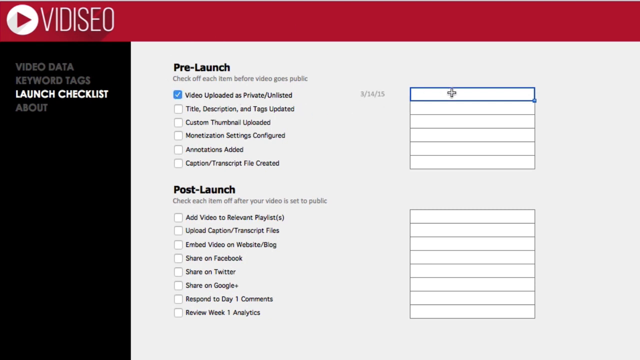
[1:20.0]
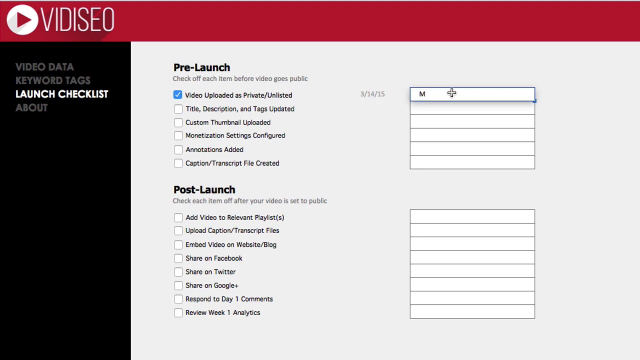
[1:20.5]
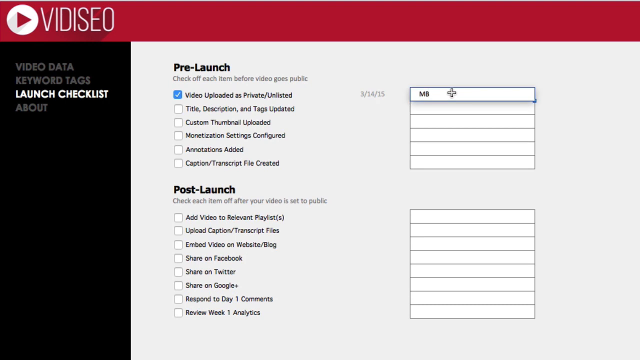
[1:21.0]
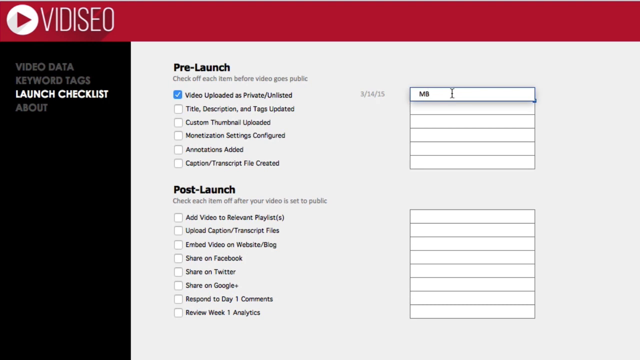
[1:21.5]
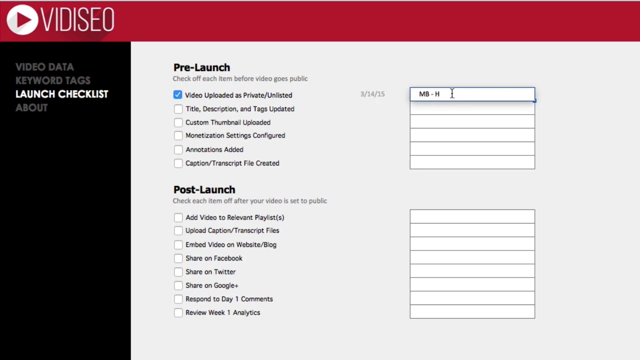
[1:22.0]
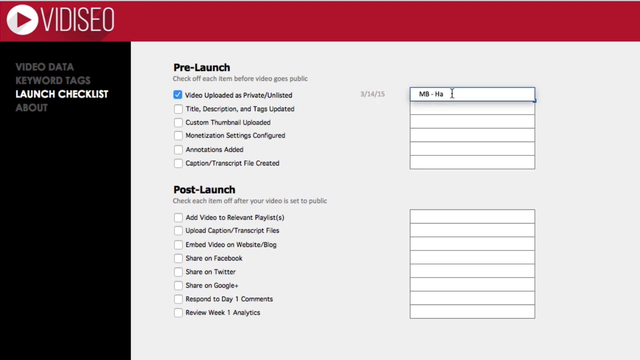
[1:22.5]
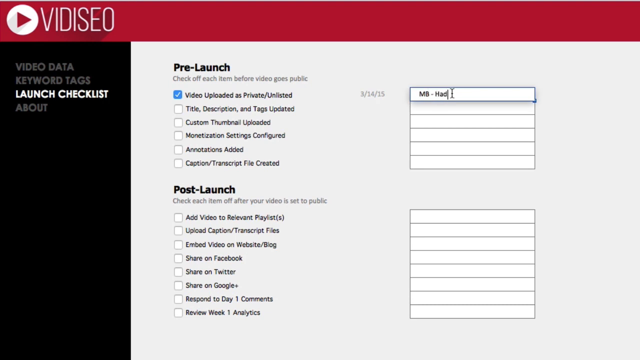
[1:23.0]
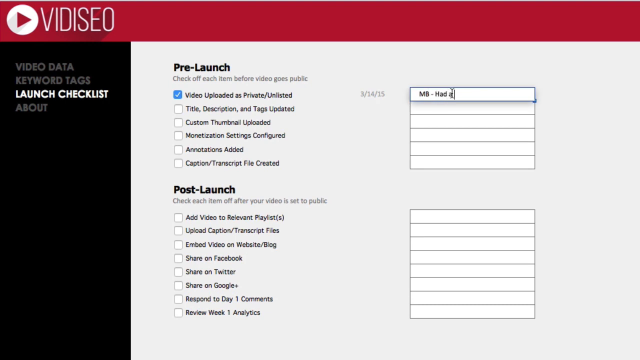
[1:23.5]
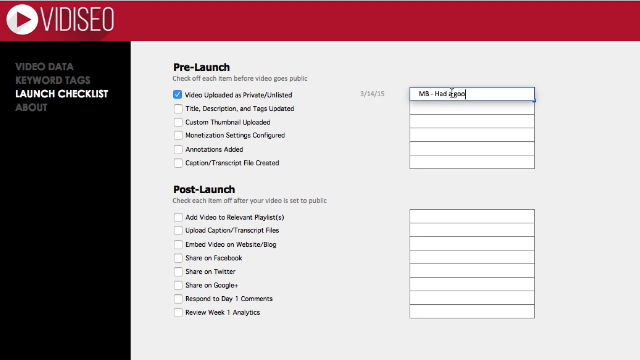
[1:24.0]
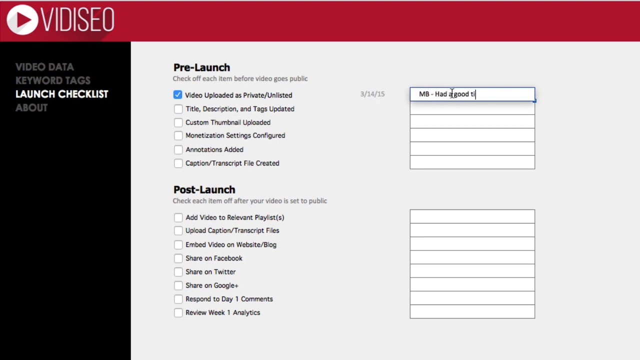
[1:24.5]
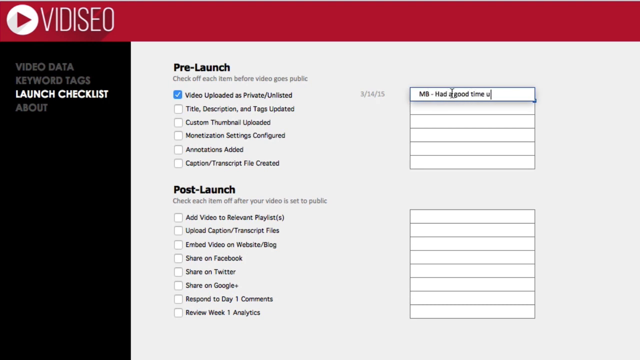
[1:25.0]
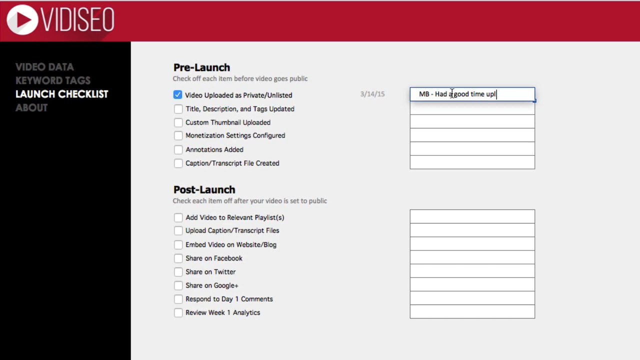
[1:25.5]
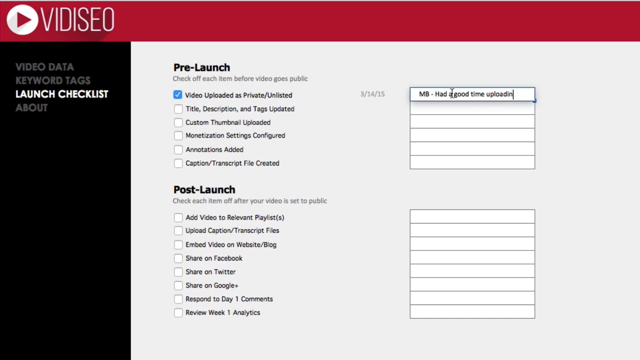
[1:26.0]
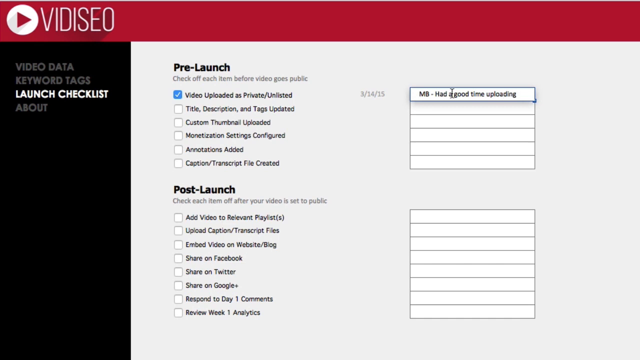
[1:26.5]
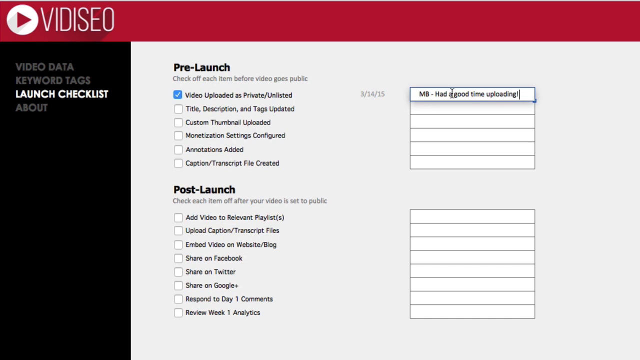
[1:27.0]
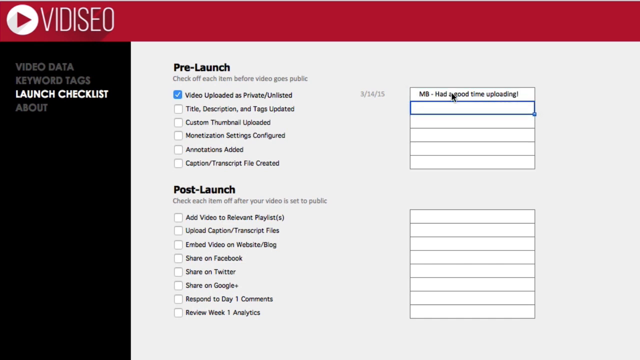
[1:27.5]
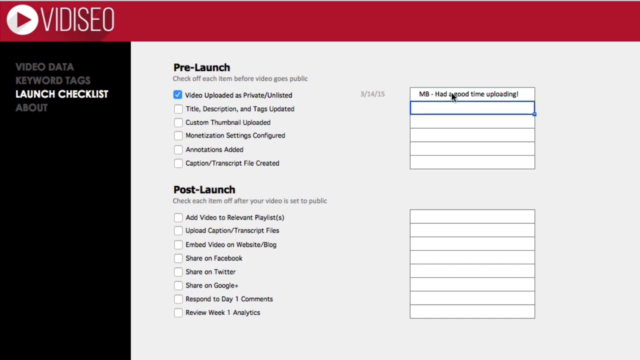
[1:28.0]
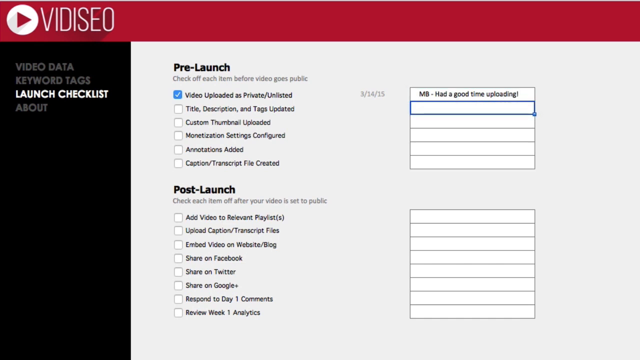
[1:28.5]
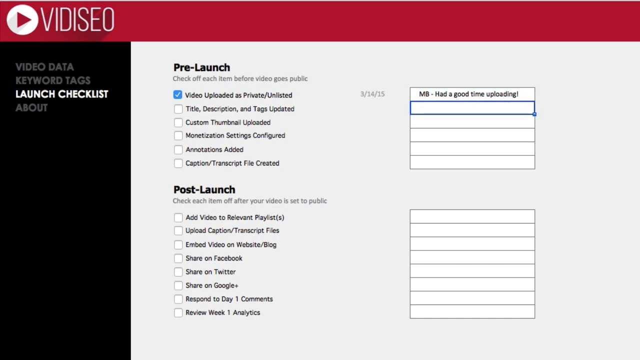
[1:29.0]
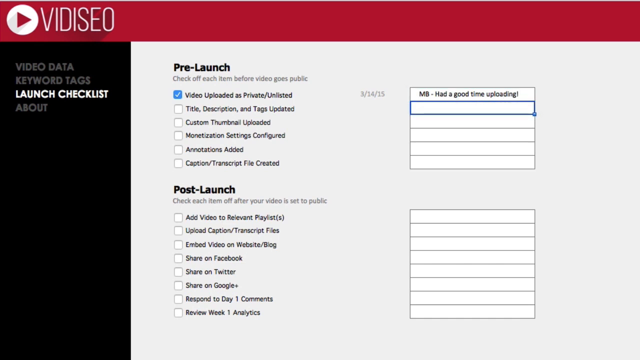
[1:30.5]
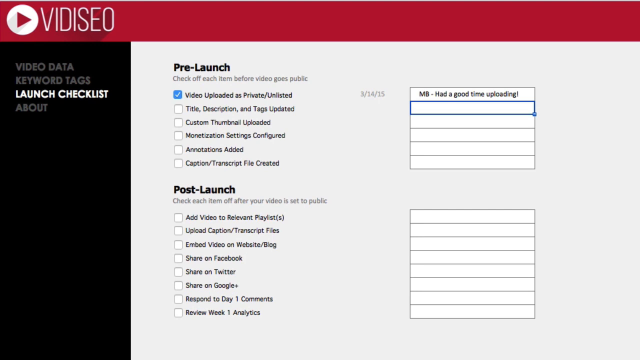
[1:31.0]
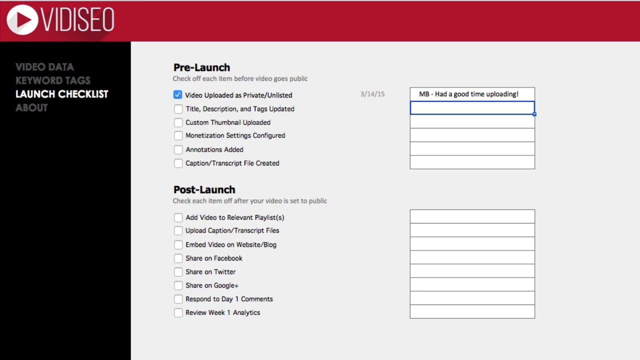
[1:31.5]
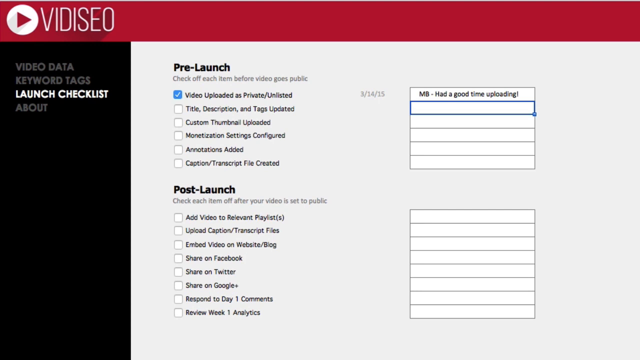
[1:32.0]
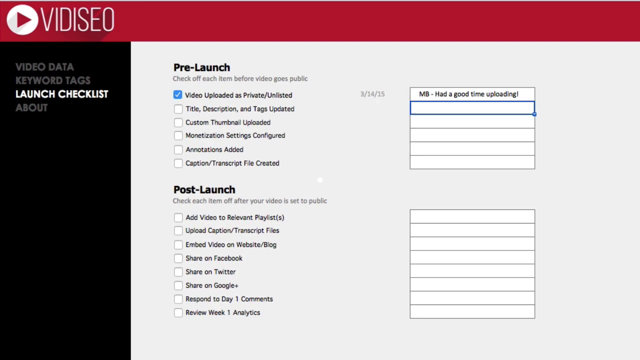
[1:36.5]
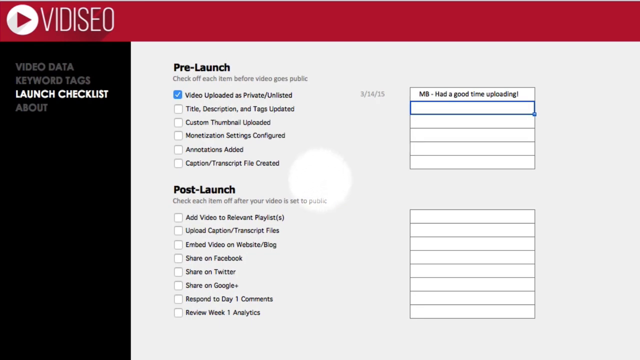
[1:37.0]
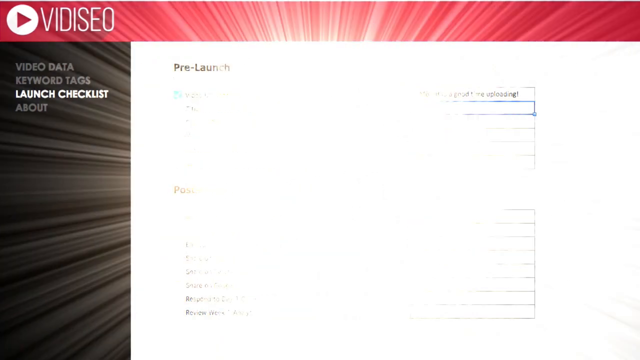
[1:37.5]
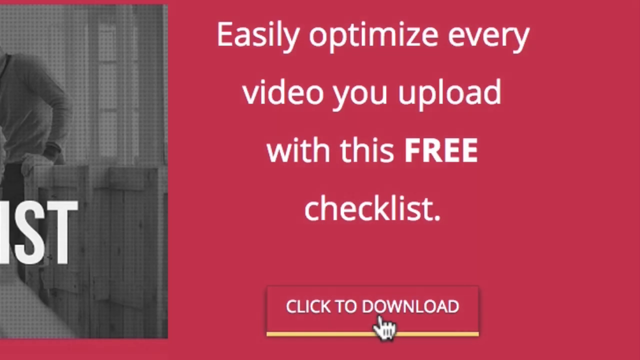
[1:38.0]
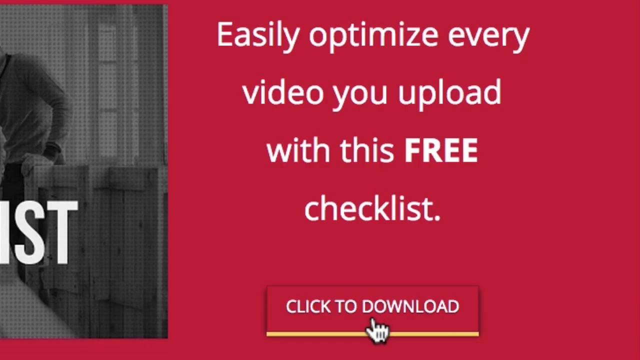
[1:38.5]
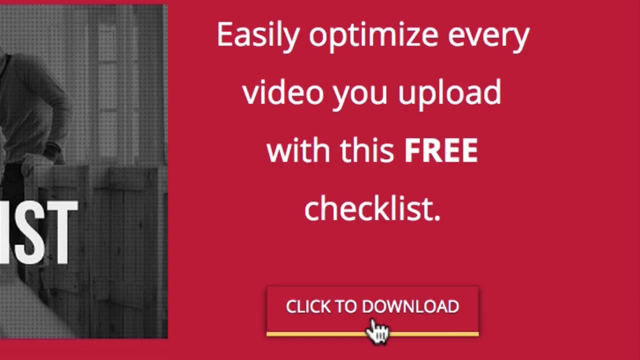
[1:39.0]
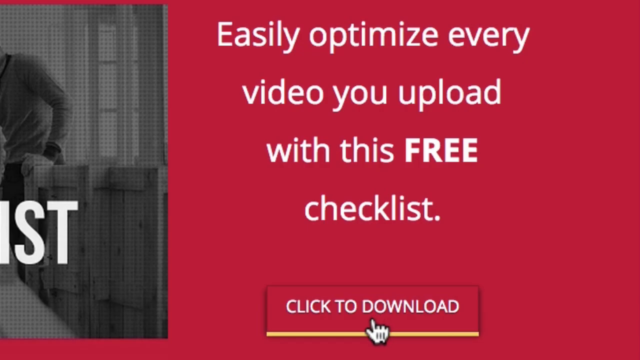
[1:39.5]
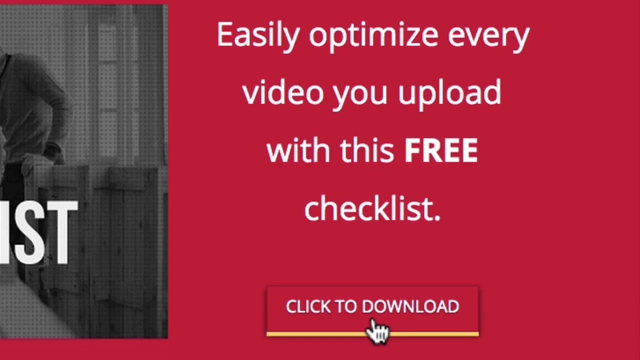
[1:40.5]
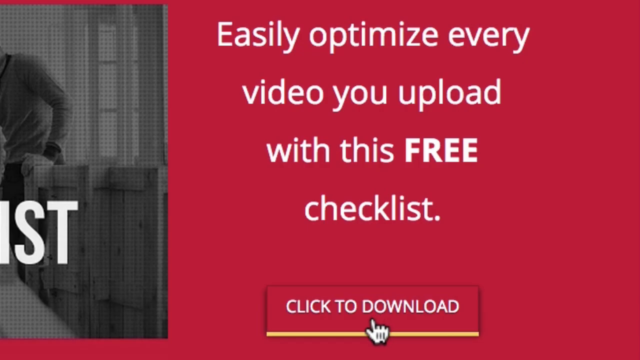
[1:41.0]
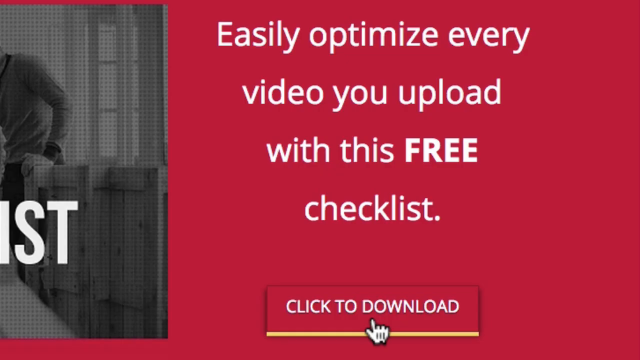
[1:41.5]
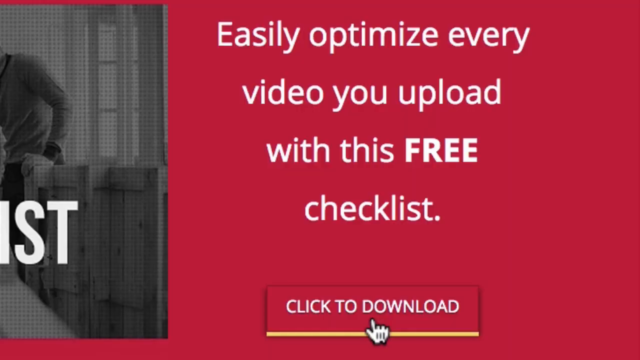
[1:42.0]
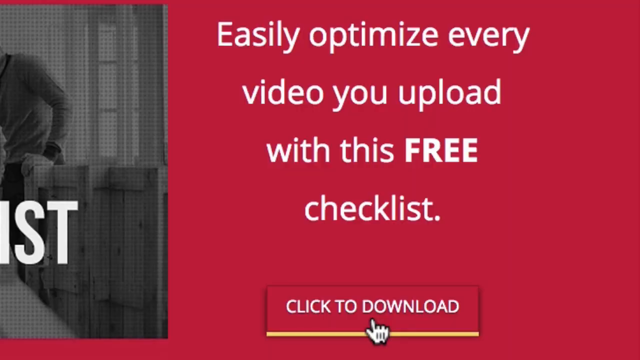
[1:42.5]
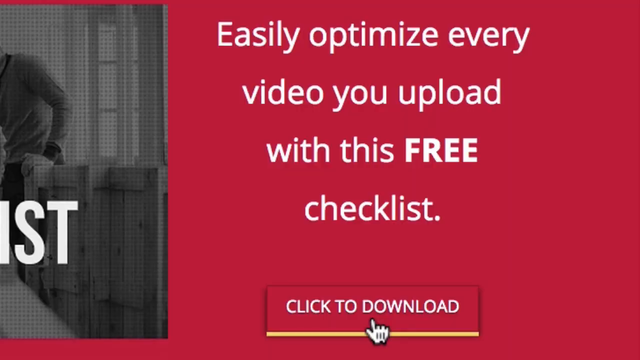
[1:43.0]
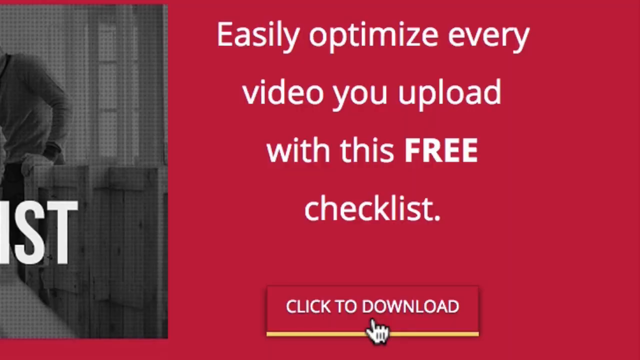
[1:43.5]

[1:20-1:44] The pre-launch page has checkboxes and reads "check off each item before video goes public," listing "video uploaded as private/unlisted," "title, description, and tags updated," "custom thumbnail uploaded," "monetization settings configured," "annotations added," and "caption/transcript file created." The post-launch section lists "add video to relevant playlists," "upload captions, transcript files," "embed video on website blog," "share on Facebook," "share on Twitter," "share on Google+," "respond to day one comments," and "review week one analytics," with text below reading "check each item off after your video is set to public." Columns on the right allow data entry, and someone types "MB had a good time uploading" in the first one, then scrolls down to the next box. The video then returns to the main screen reading "easily optimize every video you upload with this free checklist" and "click to download."